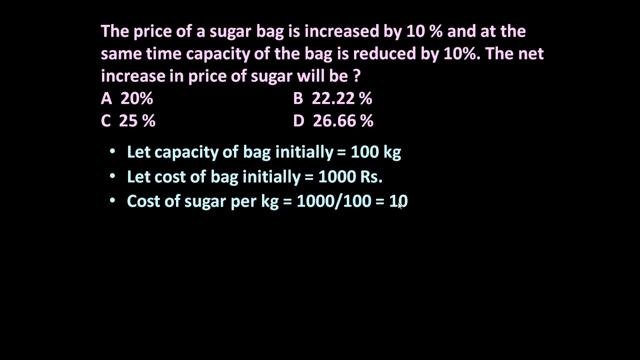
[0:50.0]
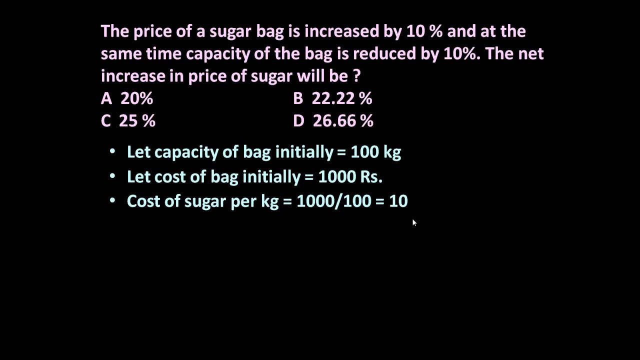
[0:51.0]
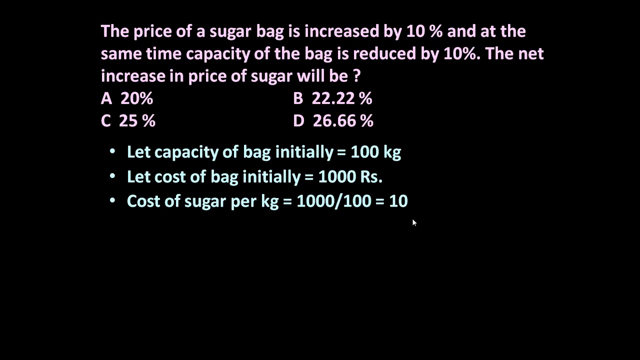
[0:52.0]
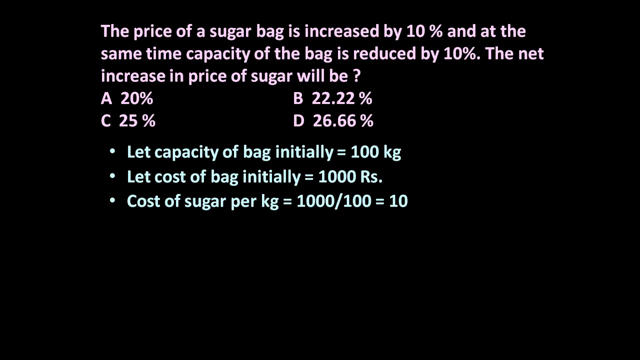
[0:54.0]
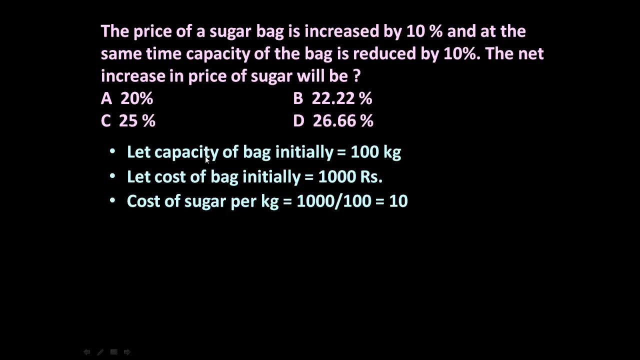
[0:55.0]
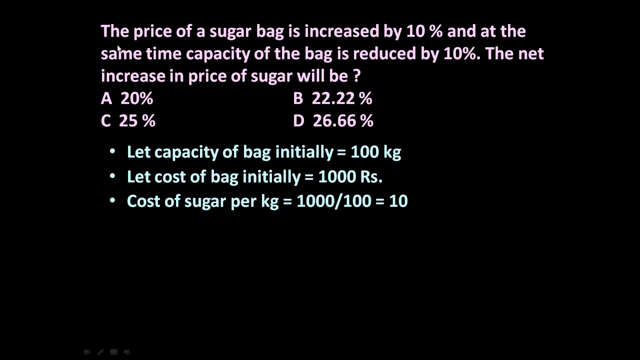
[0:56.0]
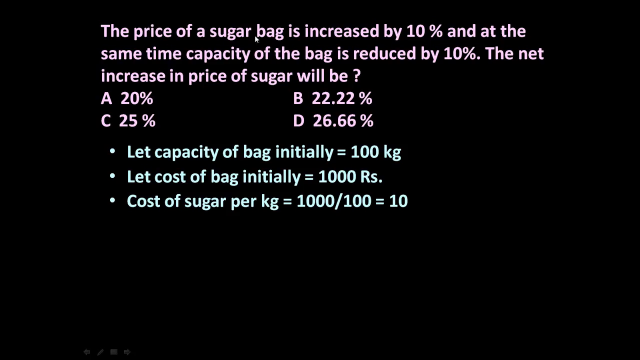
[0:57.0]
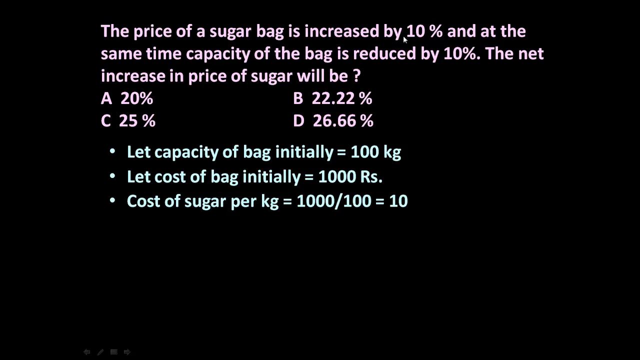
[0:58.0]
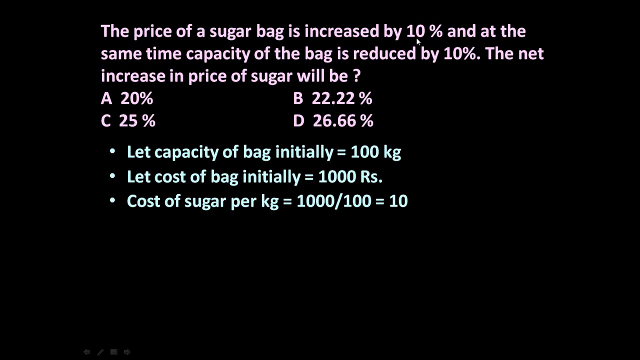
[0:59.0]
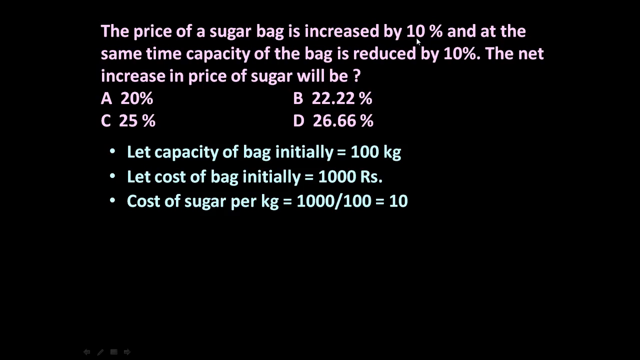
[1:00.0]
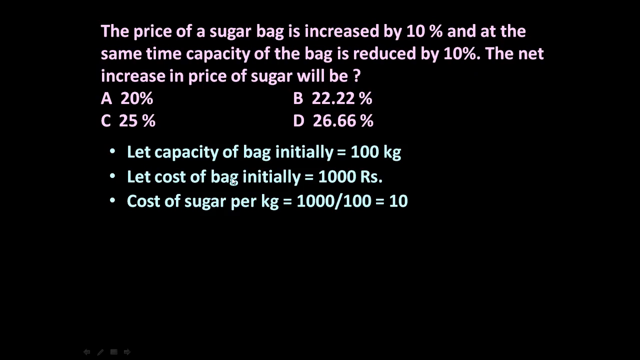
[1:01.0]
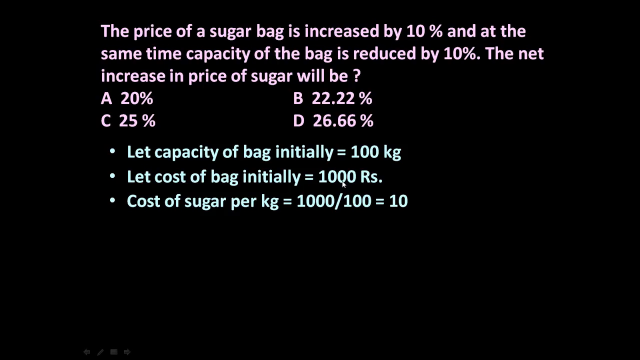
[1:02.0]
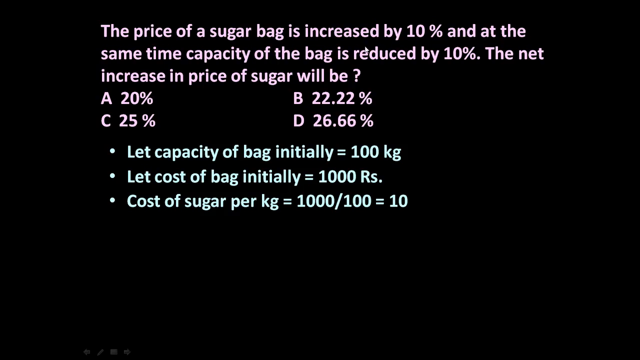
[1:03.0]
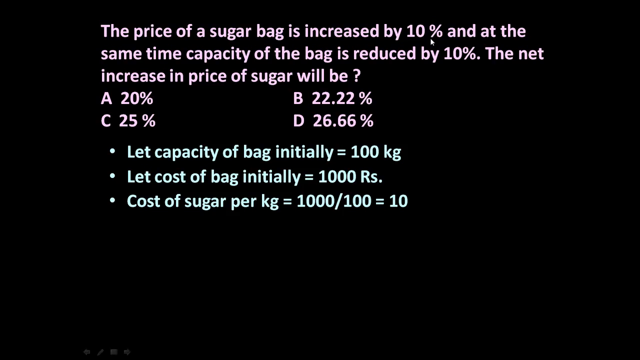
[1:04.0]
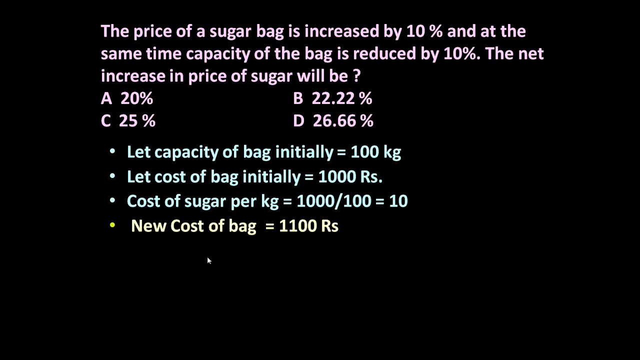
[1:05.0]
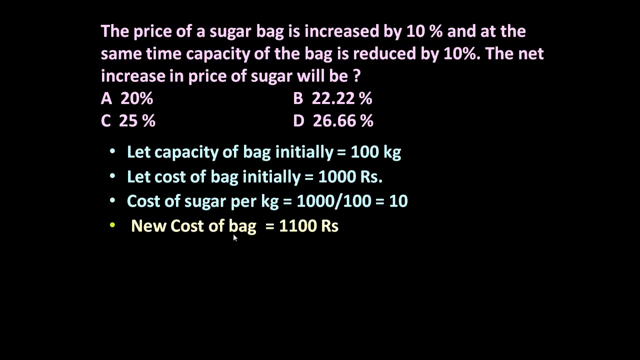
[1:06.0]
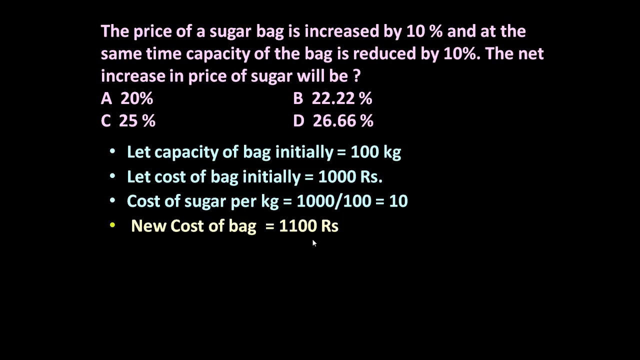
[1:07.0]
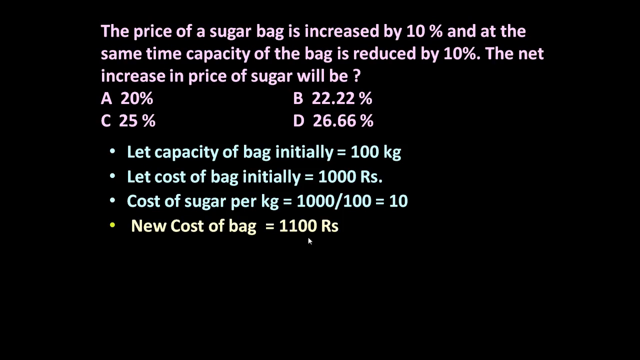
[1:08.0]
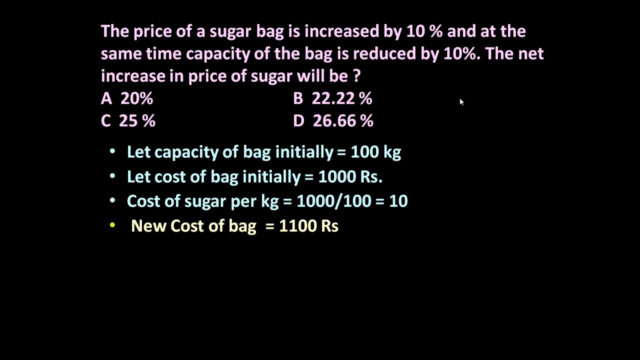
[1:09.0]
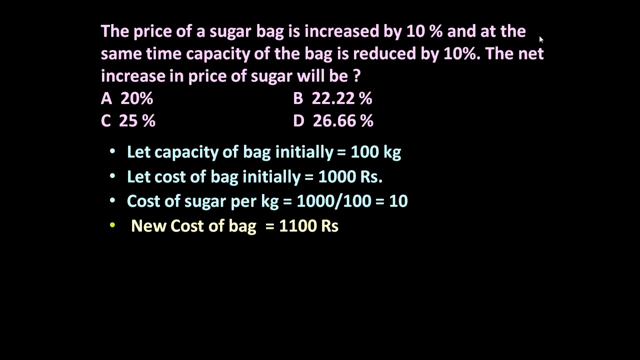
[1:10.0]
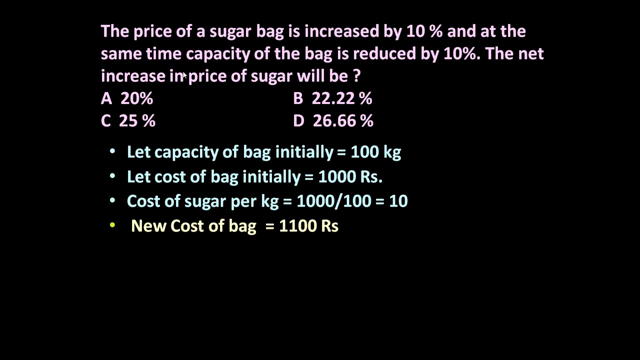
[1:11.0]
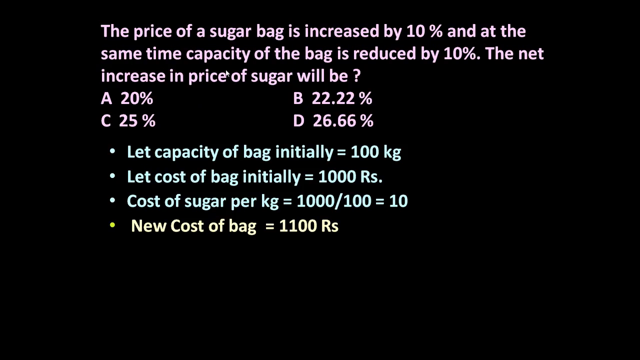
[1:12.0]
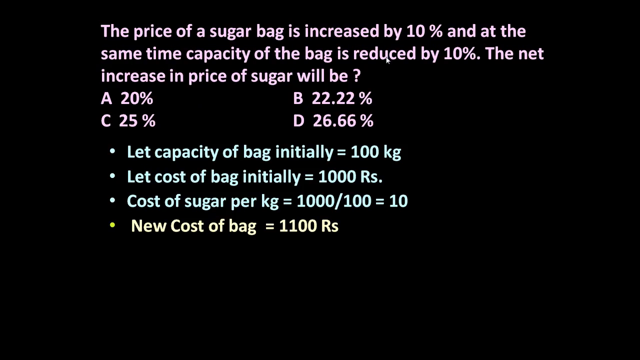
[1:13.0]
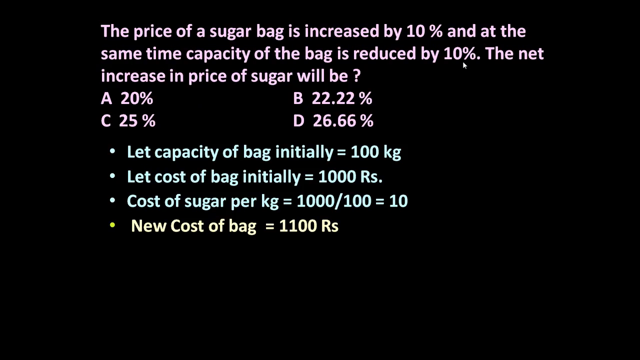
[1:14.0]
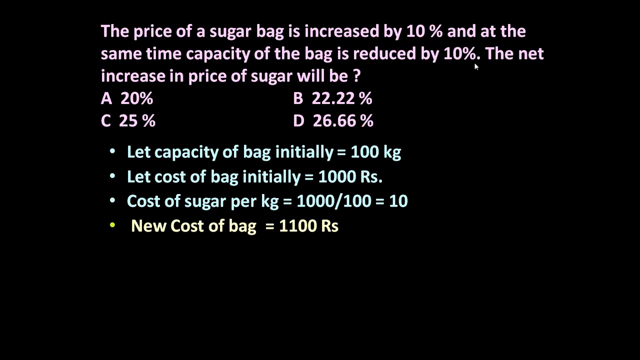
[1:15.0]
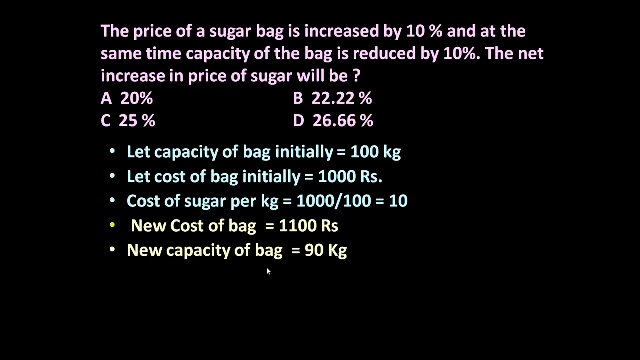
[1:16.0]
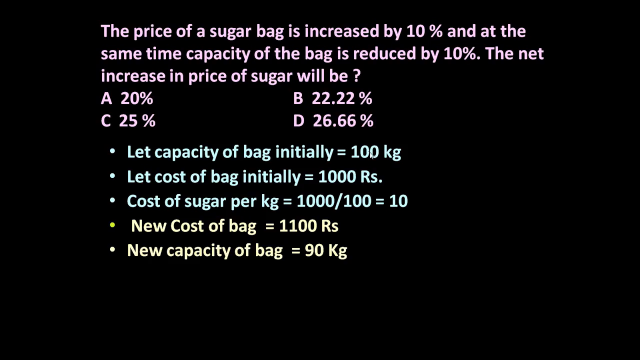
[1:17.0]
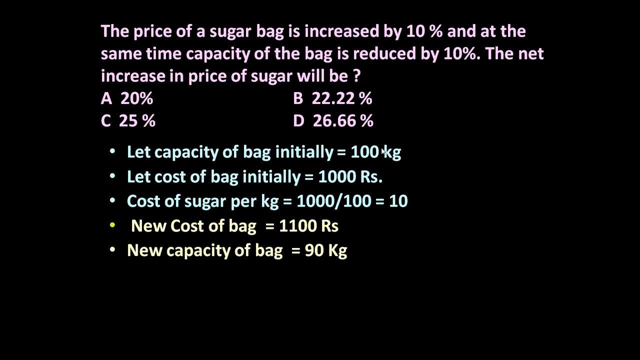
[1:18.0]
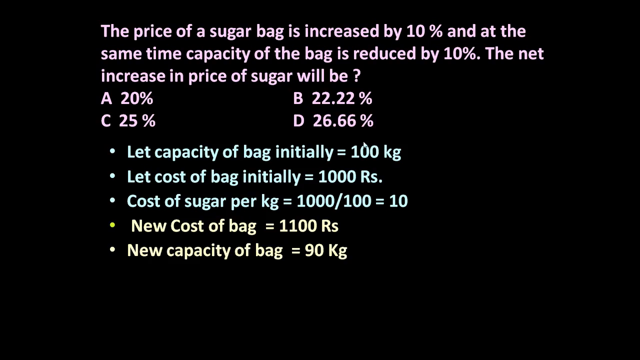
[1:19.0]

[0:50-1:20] The cursor is near the bottom right of the text. It goes back up to the top of the screen and moves left to right across the first line of the question stem. A new bullet point fades in underneath the third bullet point, reading "new cost of bag equals 1 1 0 0 r s" in a neon yellow font color. The cursor circles around this line briefly, then moves back up to the top of the screen and hovers over the second line of text. A new bullet point line is animated in just under the previous one, reading "new capacity of bag equals 90 kg," in the same neon yellow, different from the mint green of the first three bullet points. The yellow color apparently marks changes to the question stem, likely corresponding to a second step of the problem.